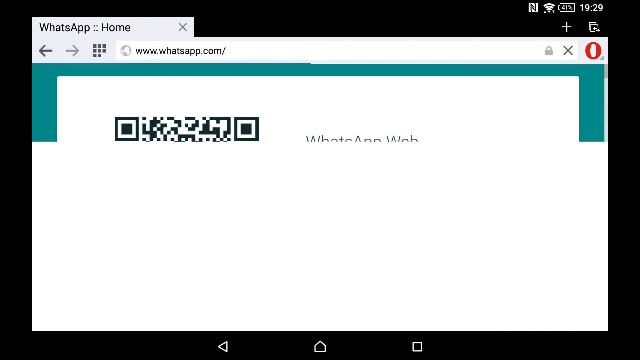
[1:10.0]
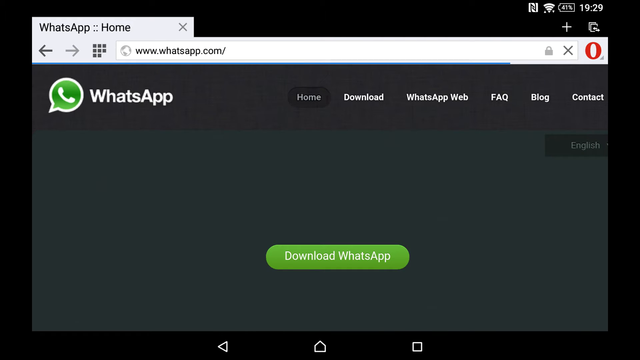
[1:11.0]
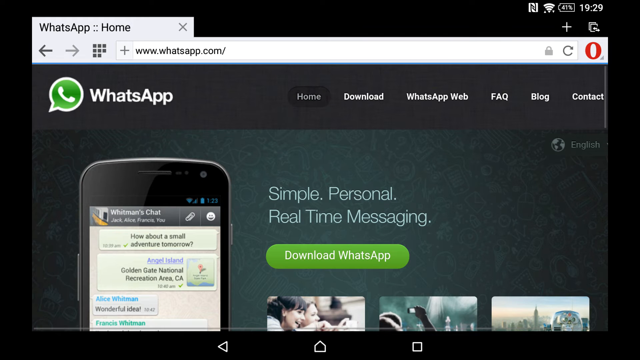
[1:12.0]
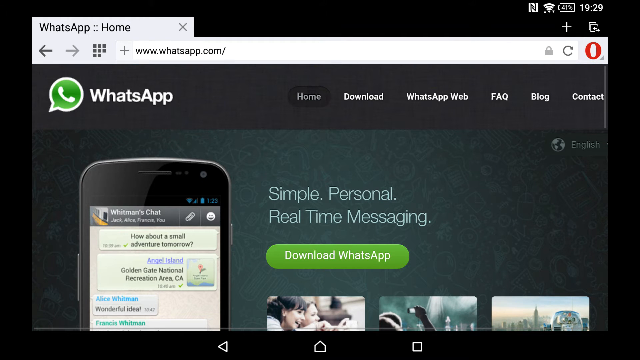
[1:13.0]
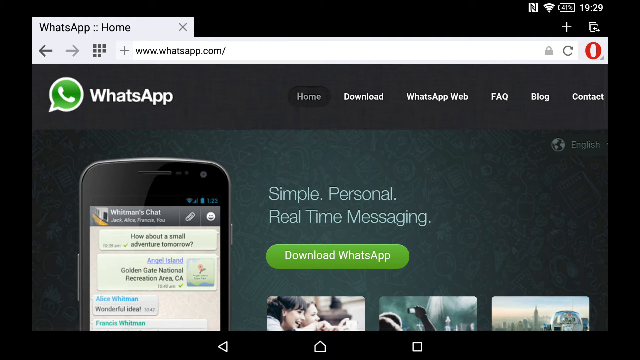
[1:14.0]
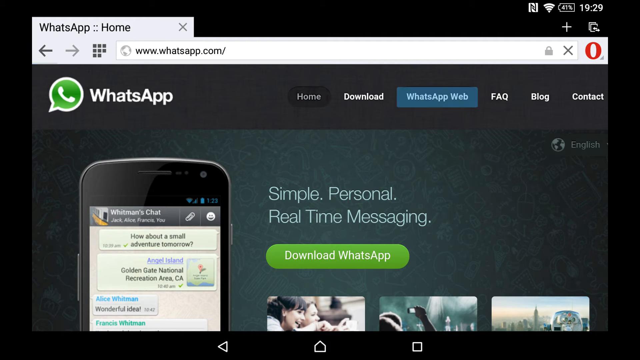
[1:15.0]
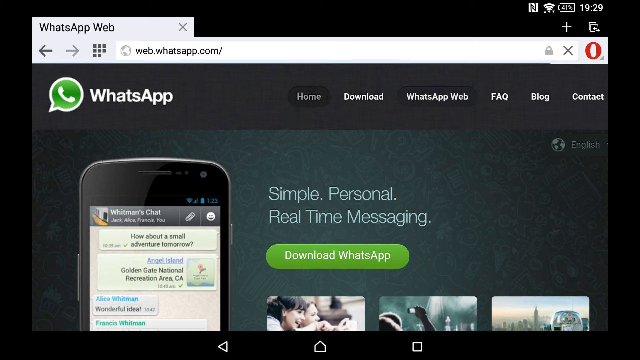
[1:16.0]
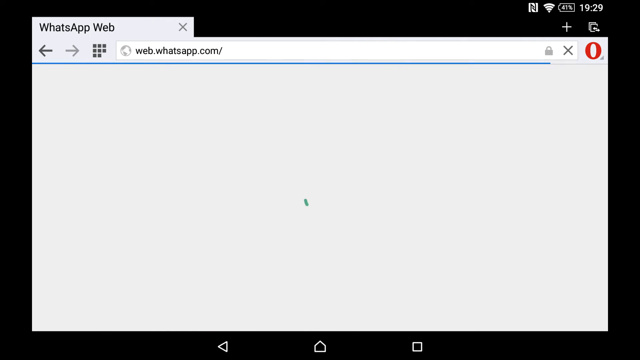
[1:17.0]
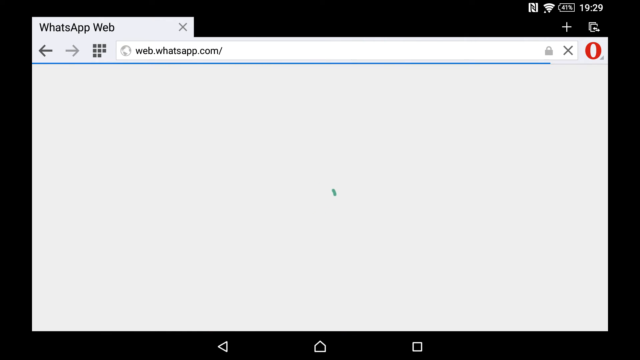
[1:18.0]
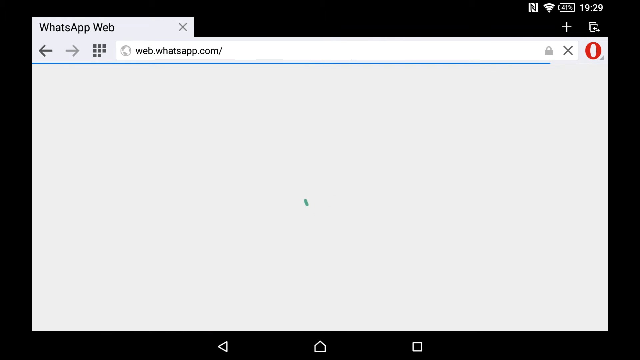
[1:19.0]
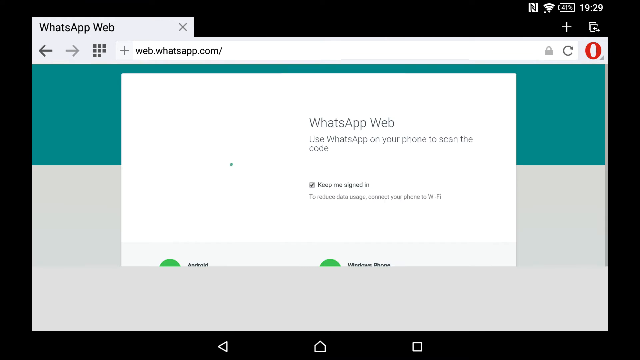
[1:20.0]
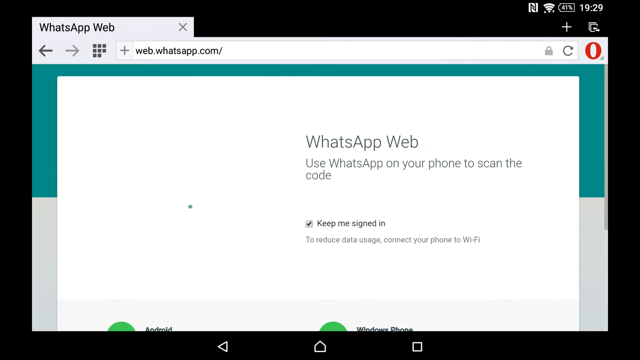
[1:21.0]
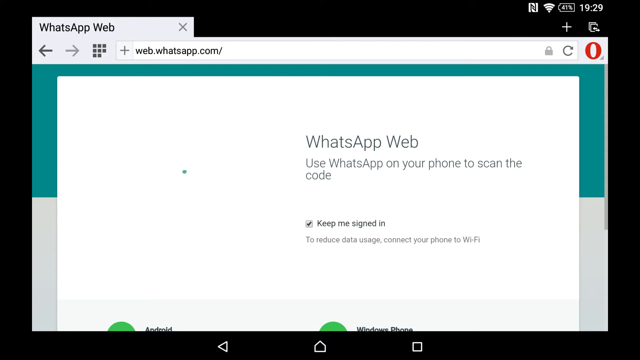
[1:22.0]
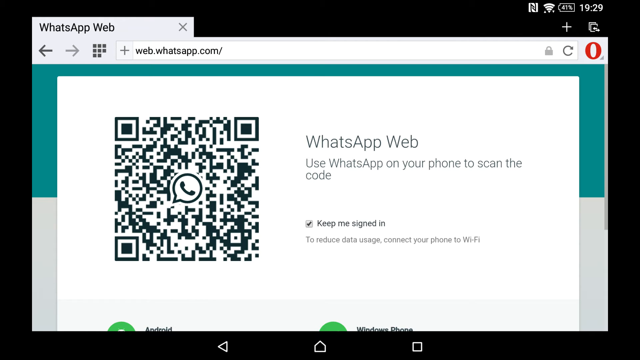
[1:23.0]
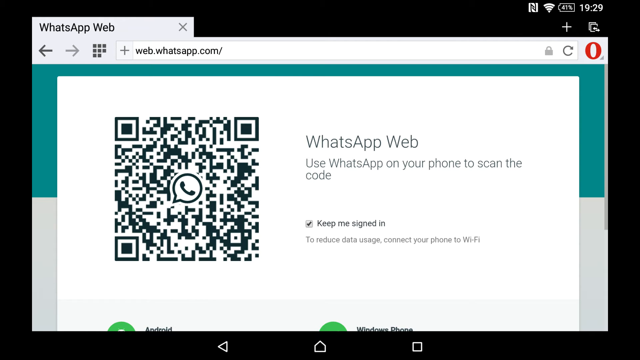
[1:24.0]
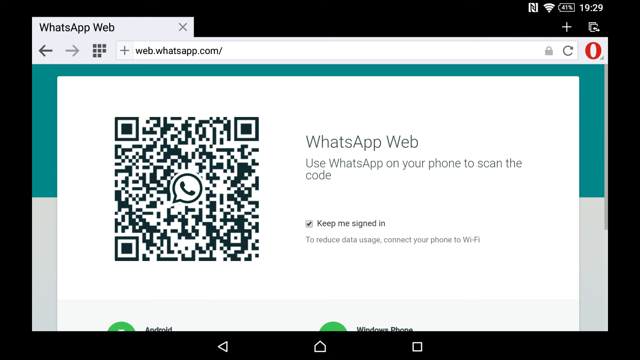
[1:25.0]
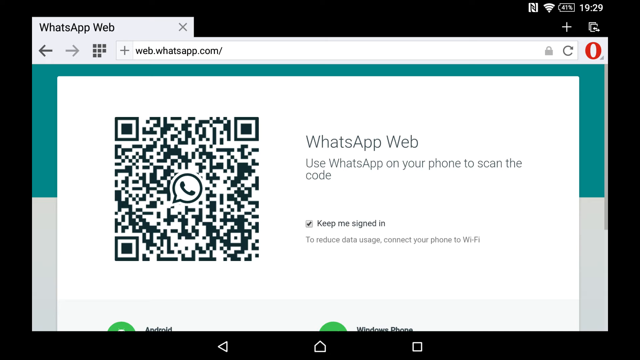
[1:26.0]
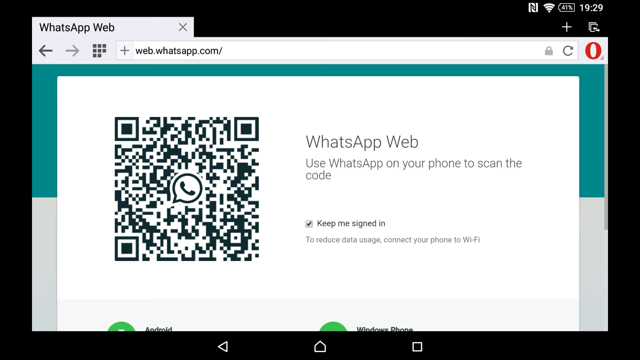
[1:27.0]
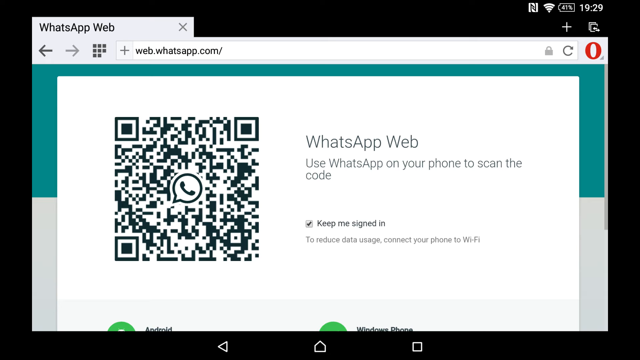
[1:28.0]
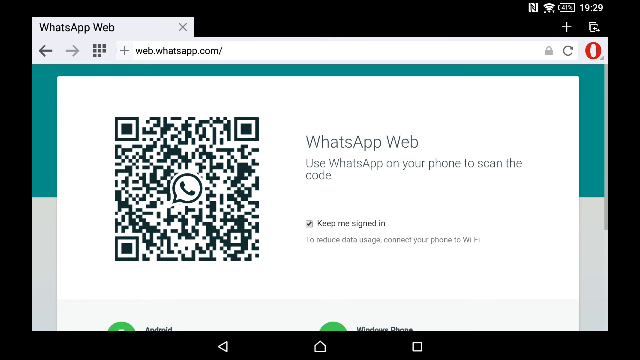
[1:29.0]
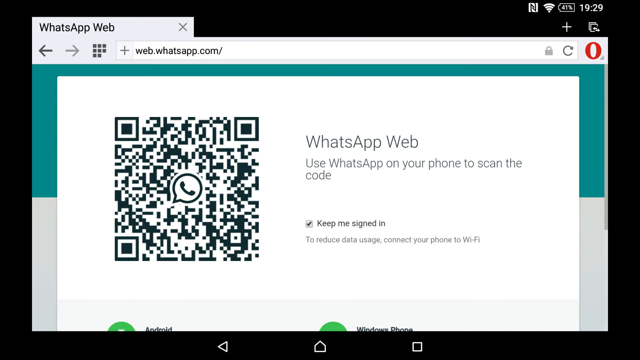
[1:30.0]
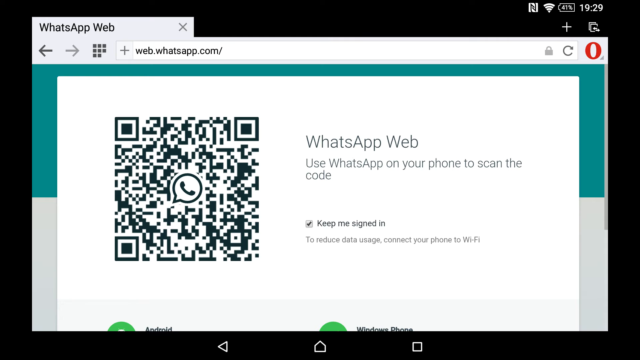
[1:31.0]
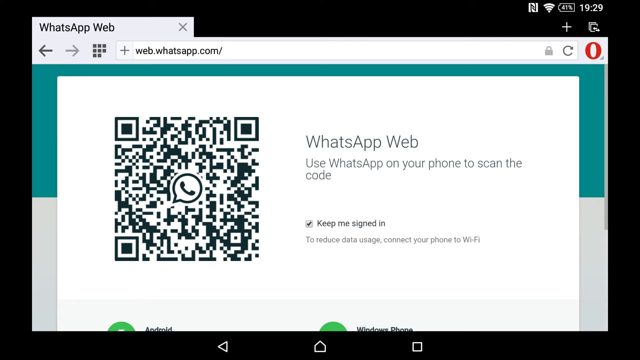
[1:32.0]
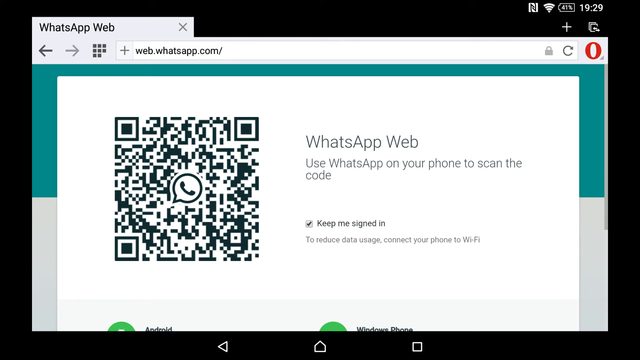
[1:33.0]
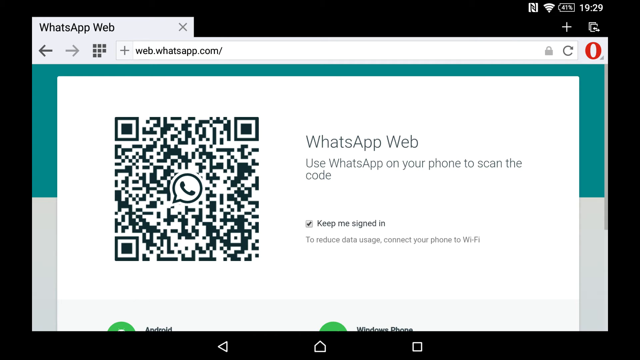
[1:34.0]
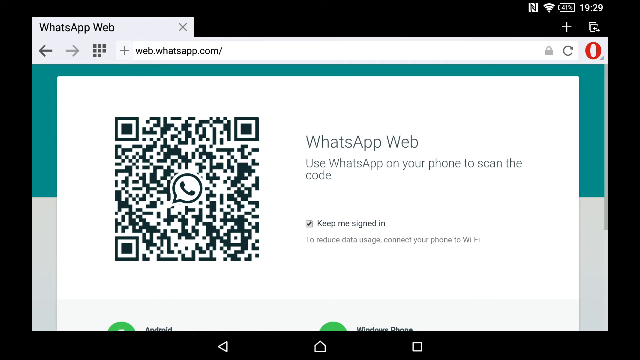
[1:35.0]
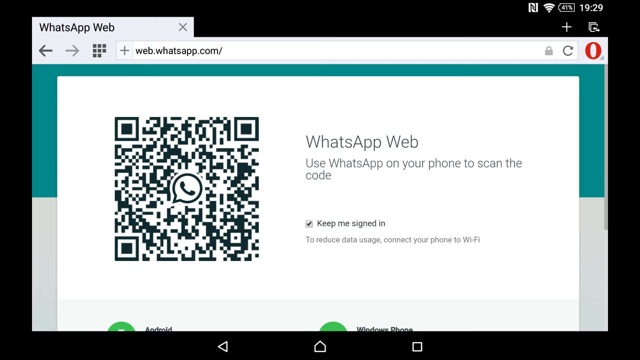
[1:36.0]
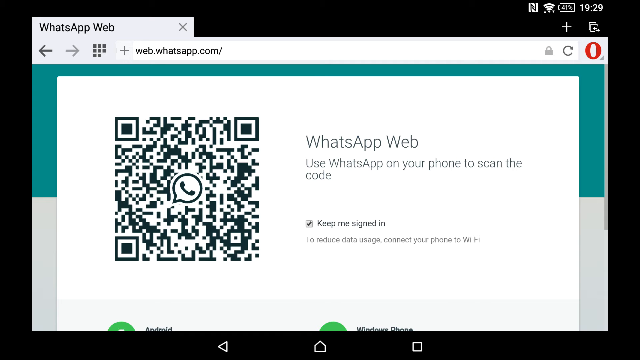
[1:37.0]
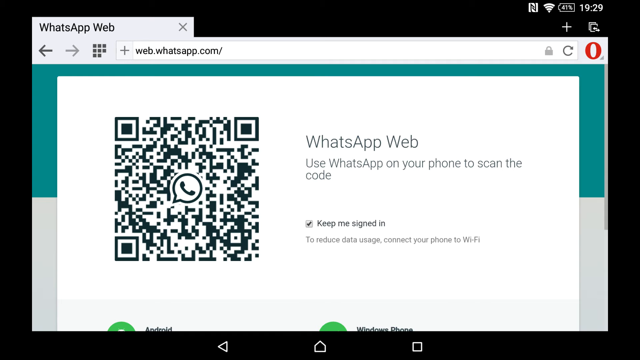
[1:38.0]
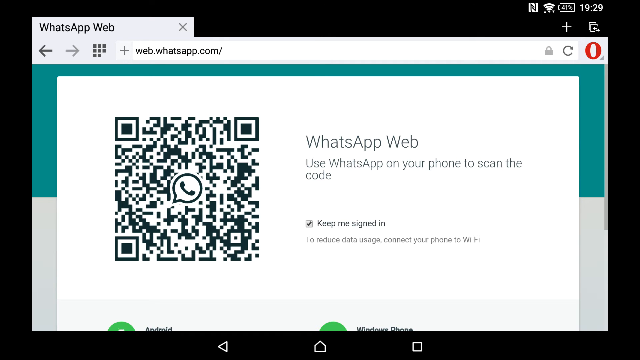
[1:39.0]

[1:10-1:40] The user is now in the WhatsApp web interface, which shows a QR code. The text says "WhatsApp web" and tells the user to use WhatsApp on their phone to scan the code. A keep-signed-in box is ticked. The page offers the option to download WhatsApp, but the user is not downloading it and goes through web.WhatsApp.com/ instead. Everything is against a white backdrop. Opera is in the top right-hand corner next to the refresh button and the lock showing the site is secure. The time is now 19:30, the battery is still at 41%, and the Wi-Fi signal is still strong.